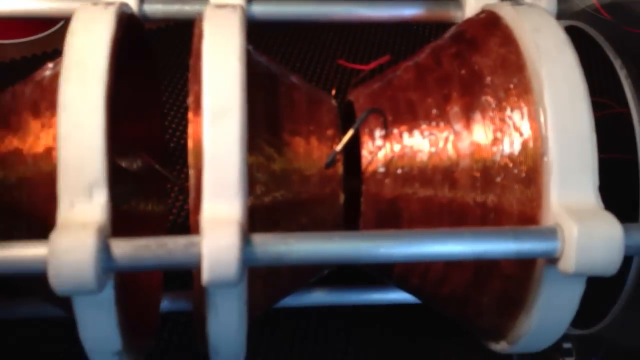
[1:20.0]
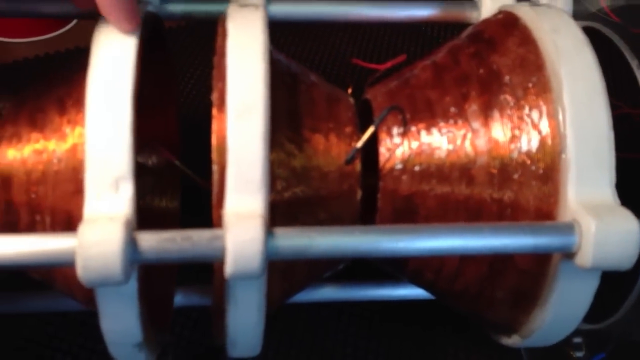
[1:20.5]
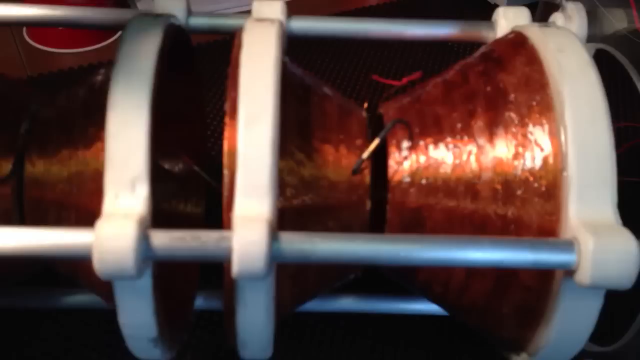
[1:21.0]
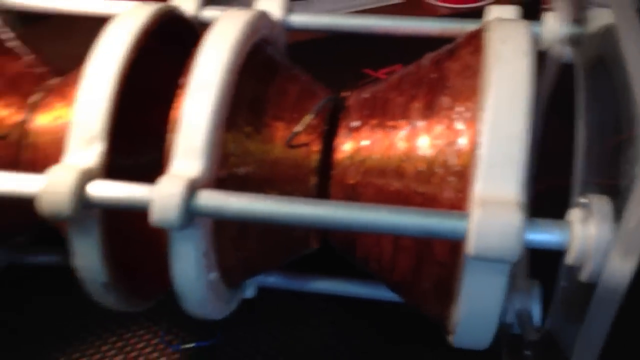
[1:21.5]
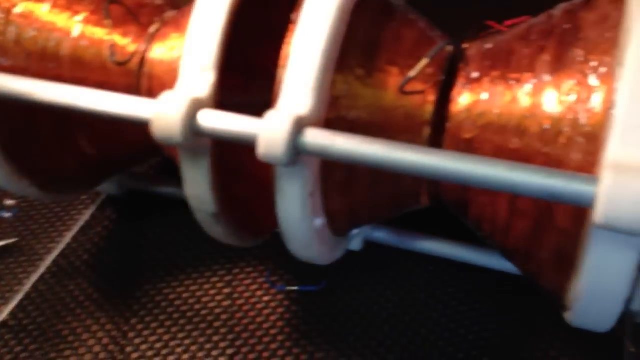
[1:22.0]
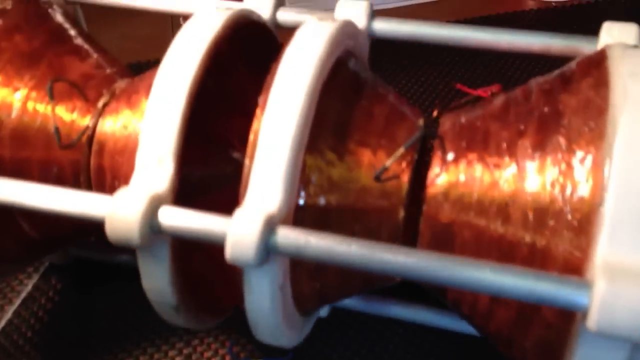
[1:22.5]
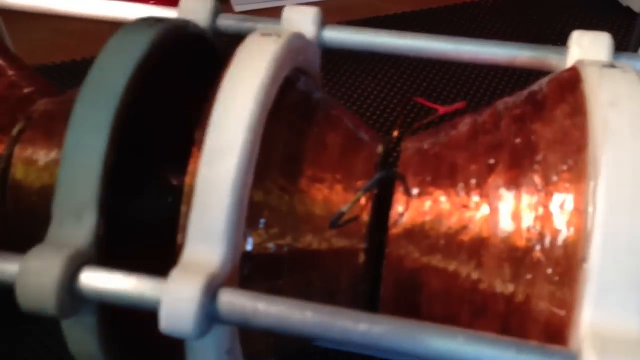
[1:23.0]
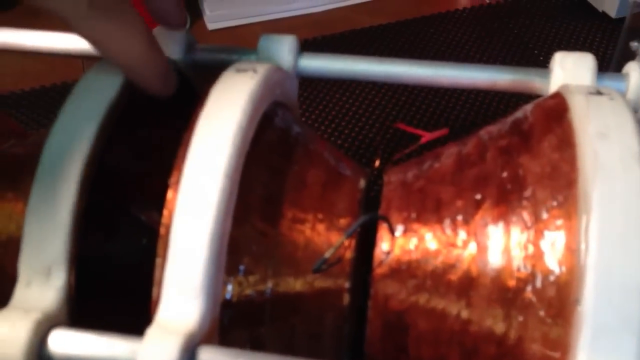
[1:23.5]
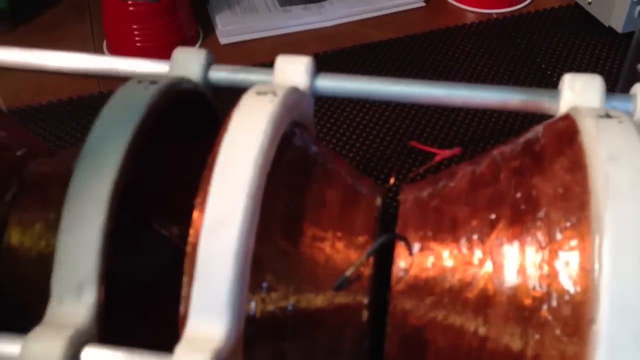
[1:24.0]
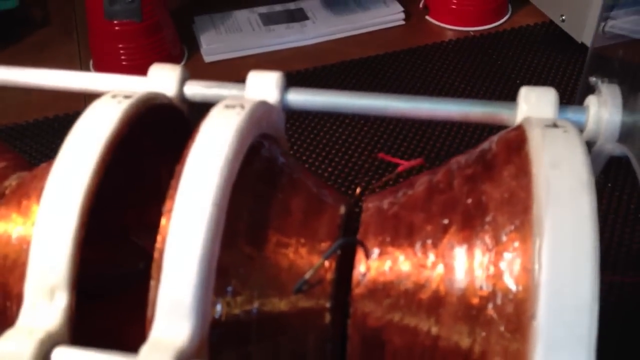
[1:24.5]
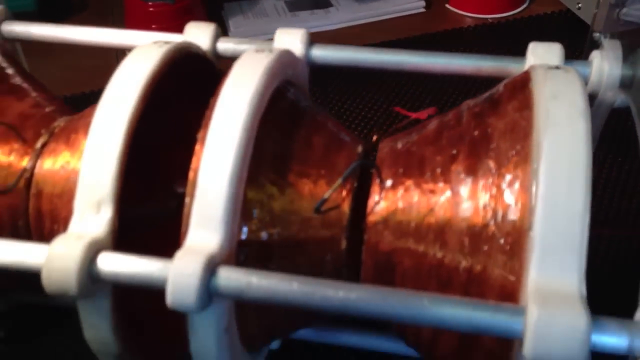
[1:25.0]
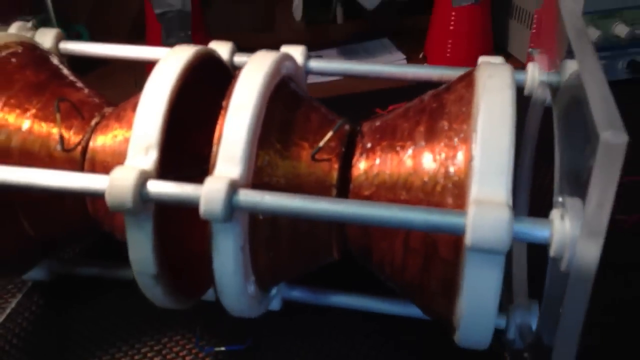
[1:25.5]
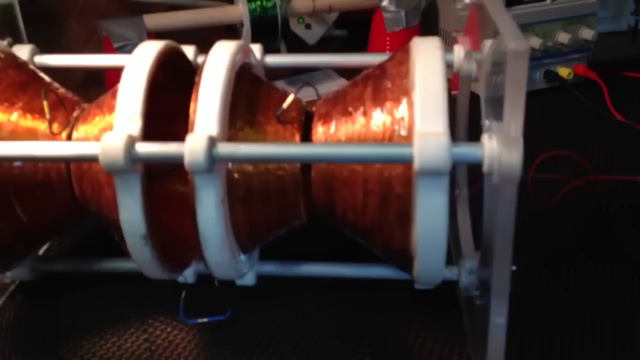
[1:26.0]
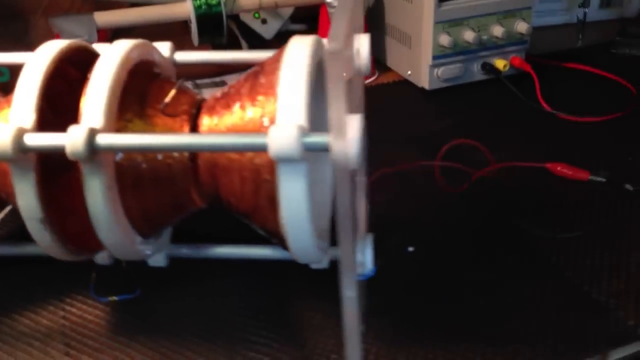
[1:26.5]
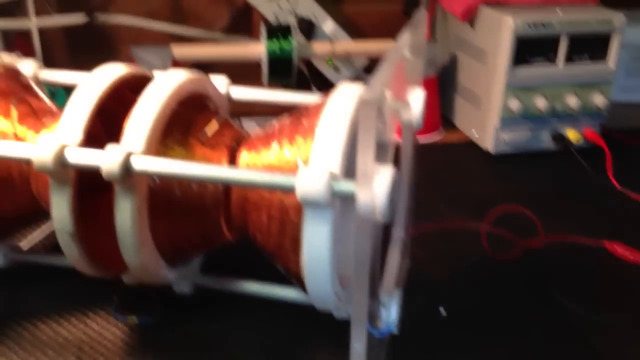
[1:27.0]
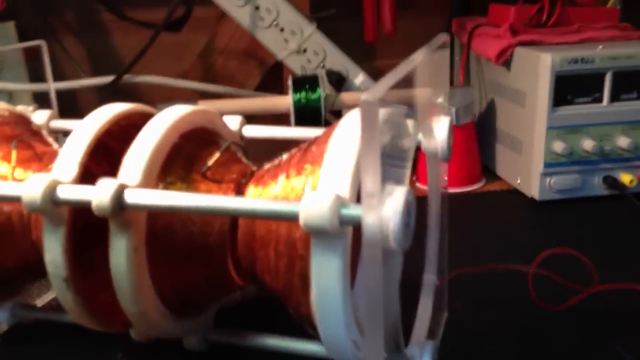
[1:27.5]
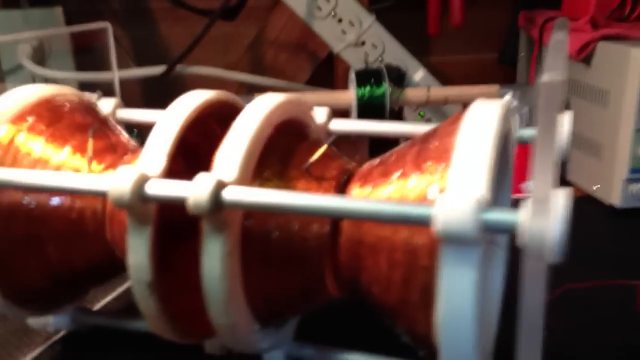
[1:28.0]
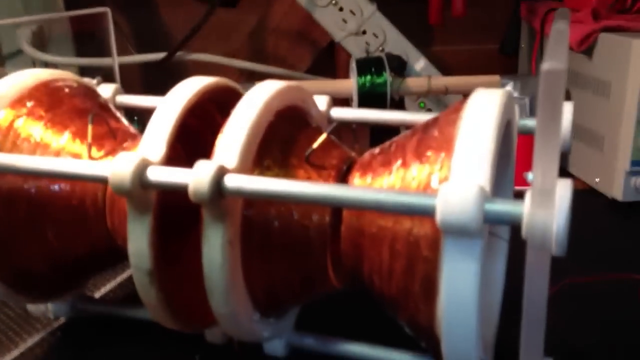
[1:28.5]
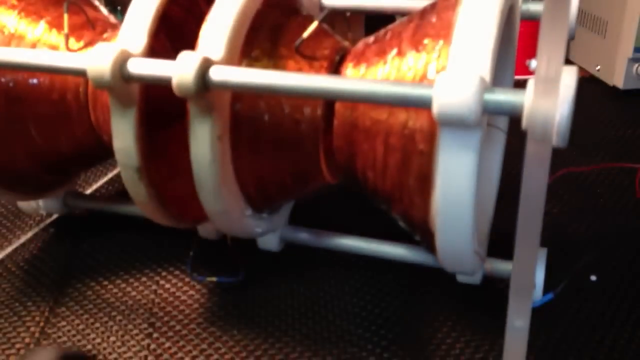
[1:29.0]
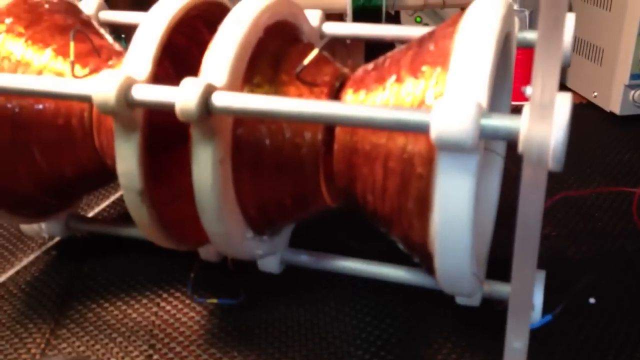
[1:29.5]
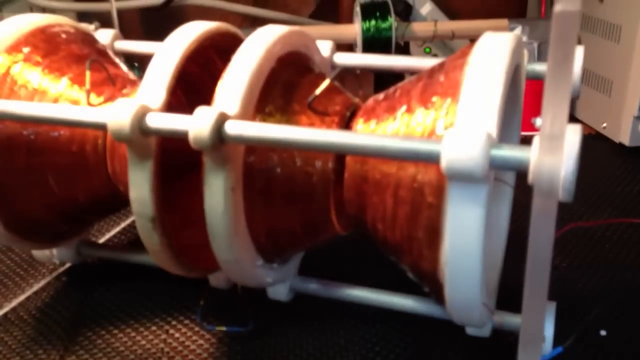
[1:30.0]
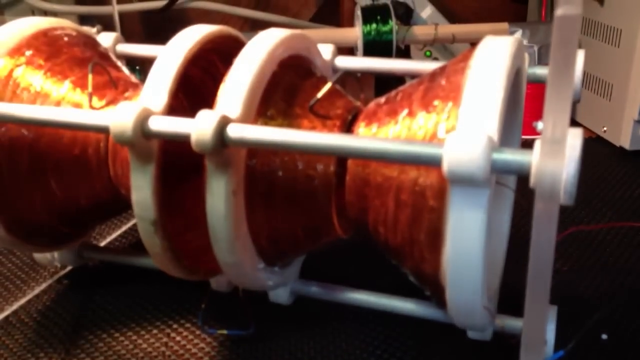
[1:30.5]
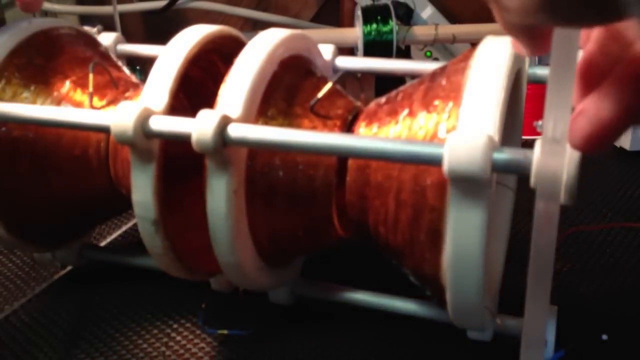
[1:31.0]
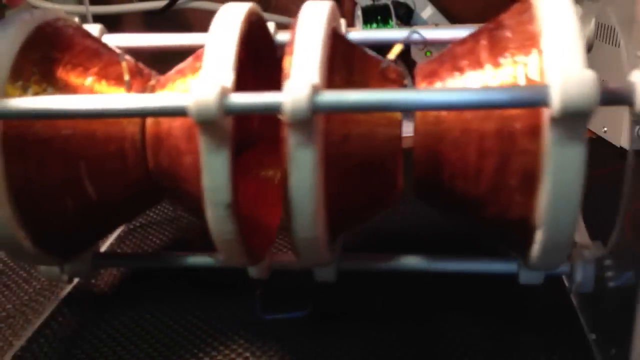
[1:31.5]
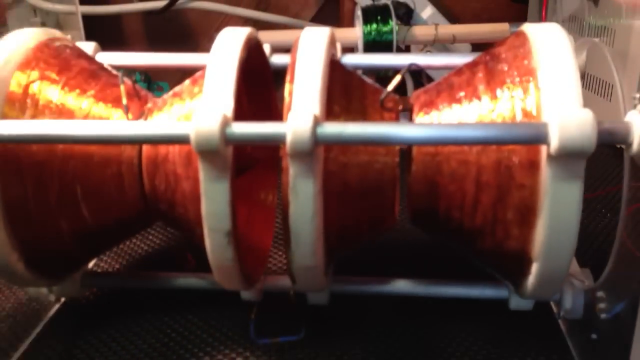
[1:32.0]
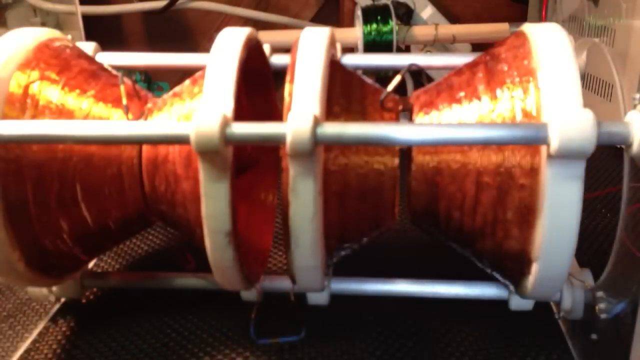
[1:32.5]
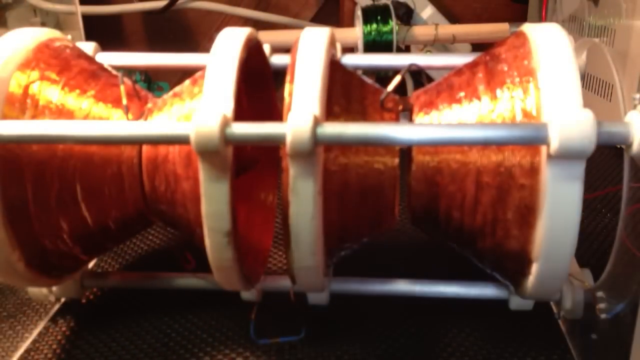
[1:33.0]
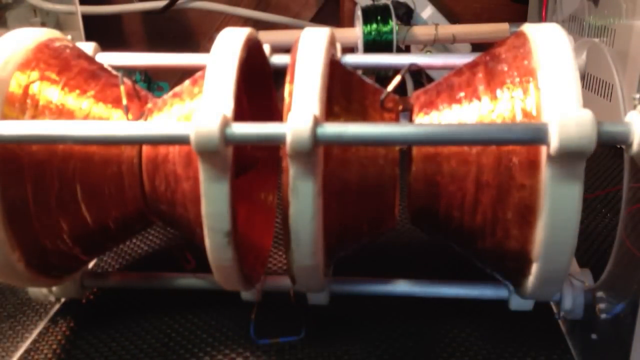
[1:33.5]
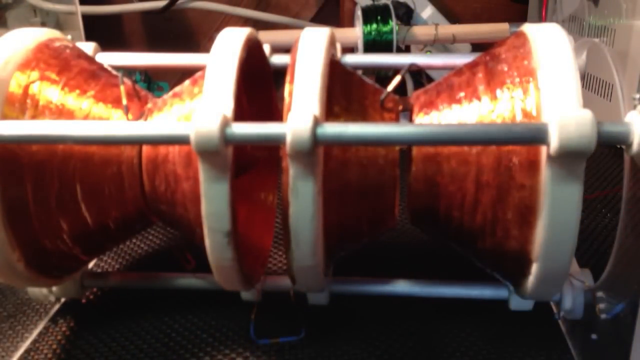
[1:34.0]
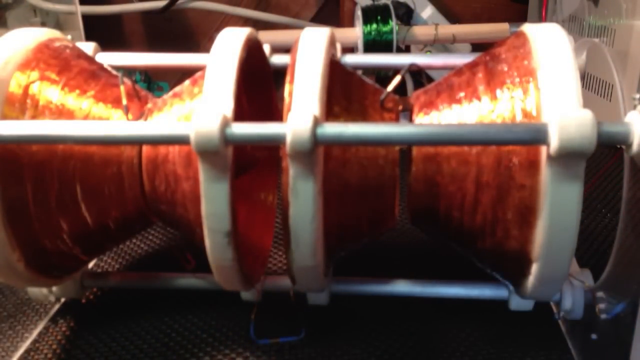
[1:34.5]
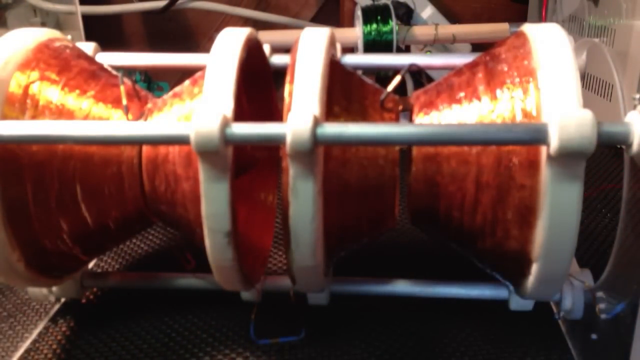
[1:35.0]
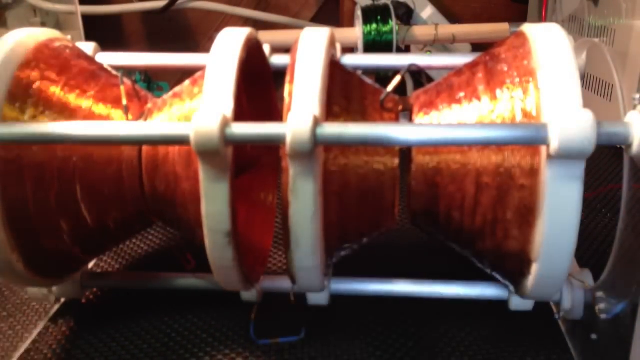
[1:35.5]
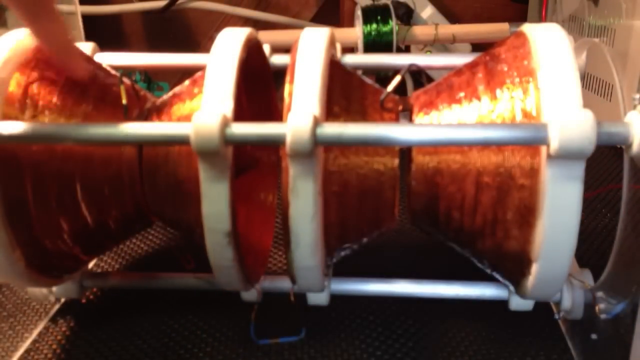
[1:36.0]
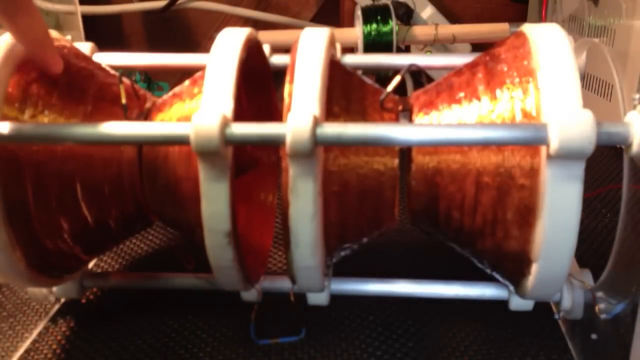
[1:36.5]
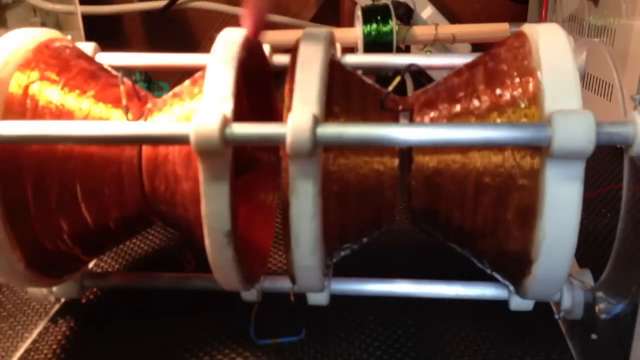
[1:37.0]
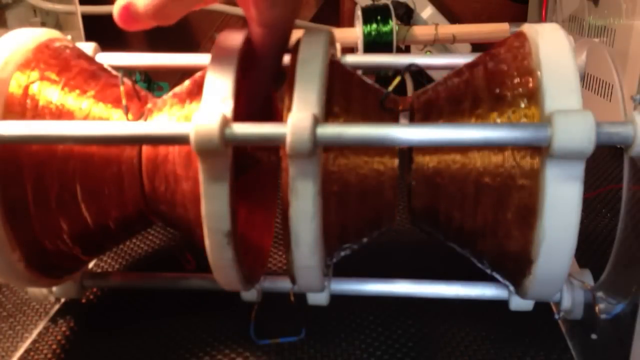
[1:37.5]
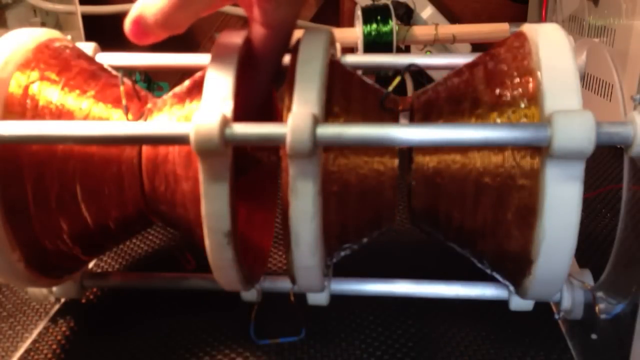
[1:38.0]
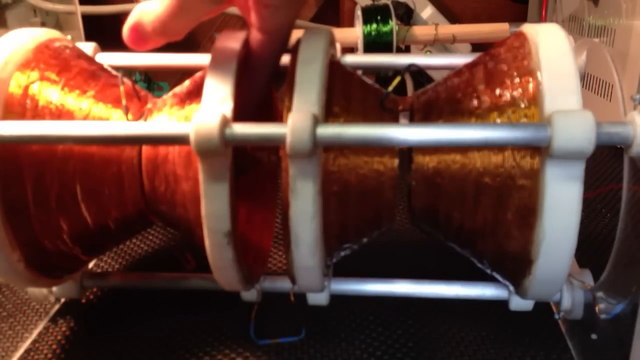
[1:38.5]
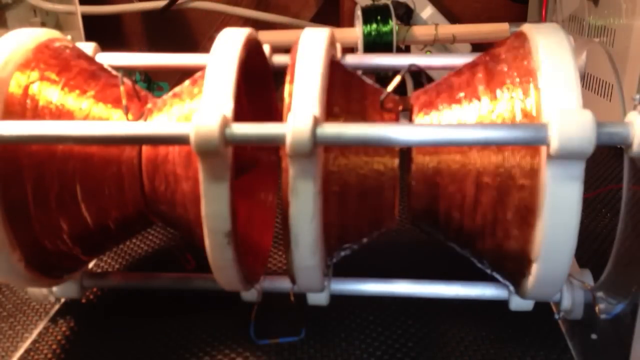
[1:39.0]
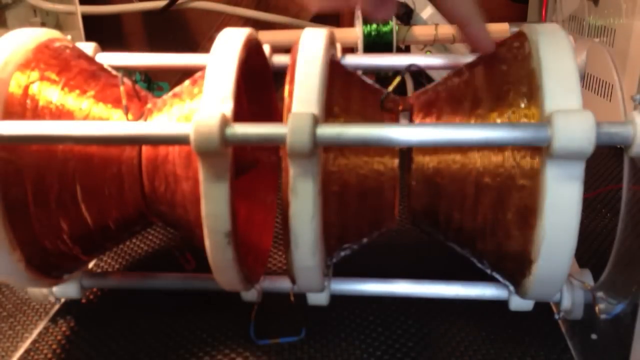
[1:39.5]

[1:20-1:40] The camera moves over the top right of the device, somewhat shaky as he moves it a lot, then is fixed back into position, focused on the right-hand side of the device. He moves his index finger over the left-hand side of the device and hooks it under the left middle part, then points toward the right-hand side, pointing at the shiny copper metal wire wound around it. At the top right a black wire comes out of the device, and there is a red wire at the back.